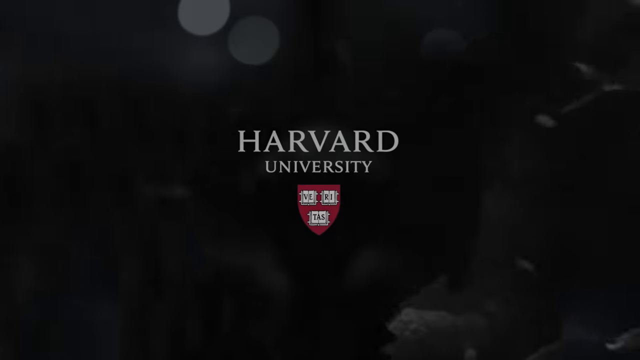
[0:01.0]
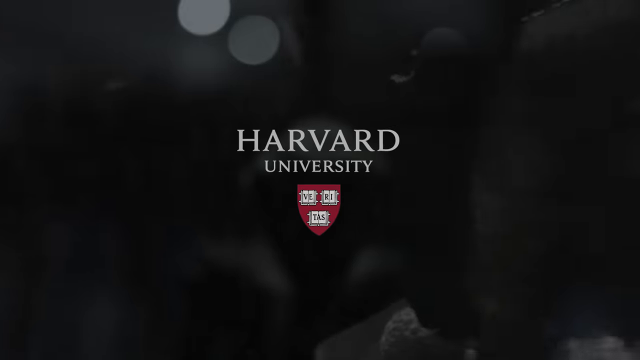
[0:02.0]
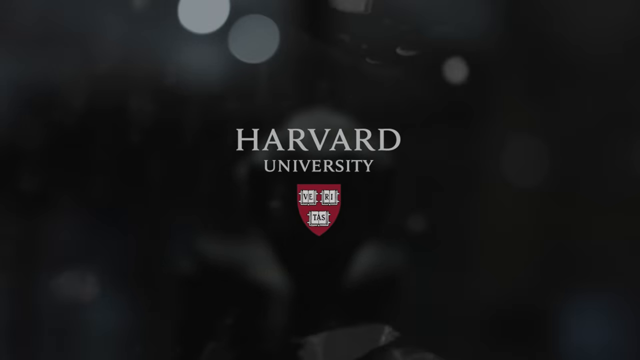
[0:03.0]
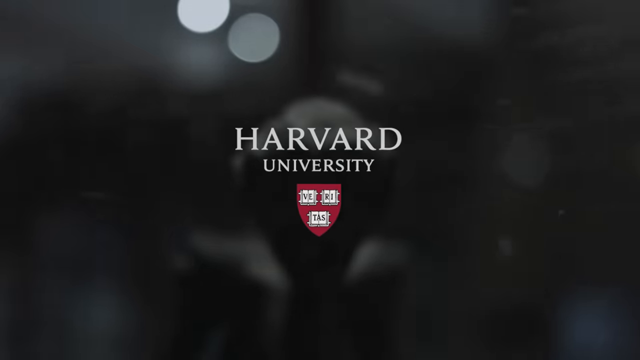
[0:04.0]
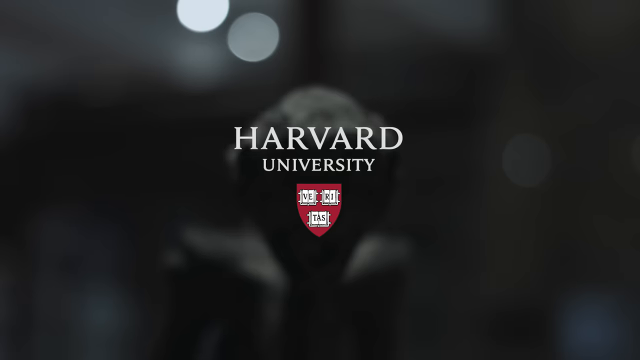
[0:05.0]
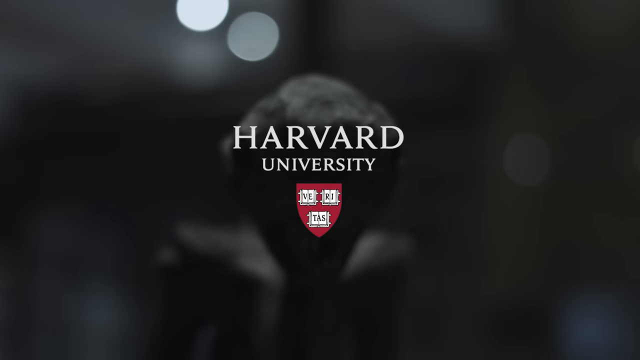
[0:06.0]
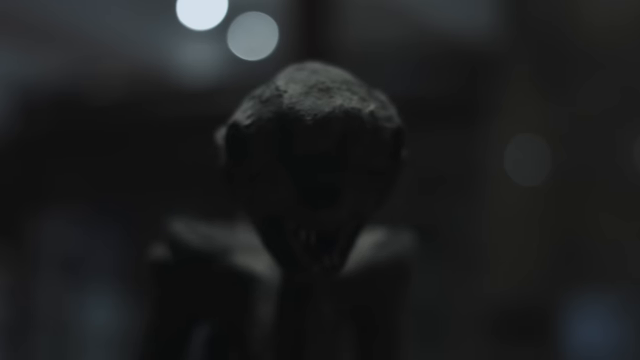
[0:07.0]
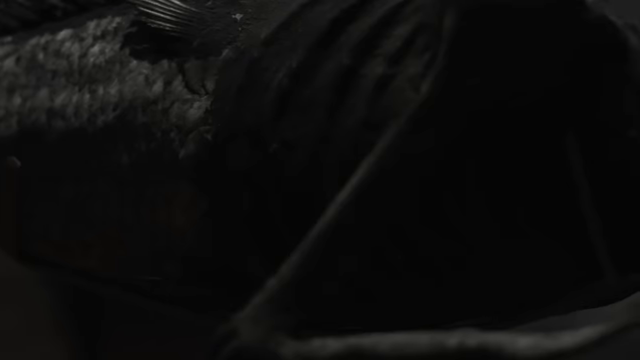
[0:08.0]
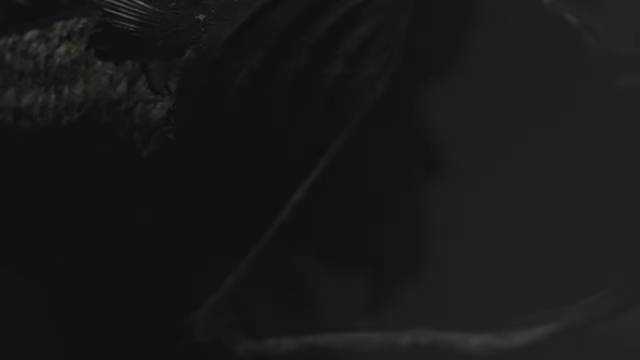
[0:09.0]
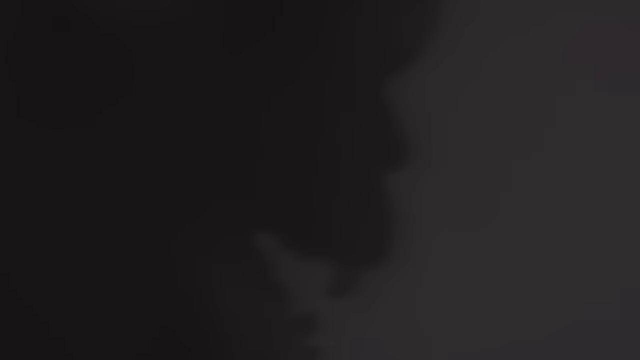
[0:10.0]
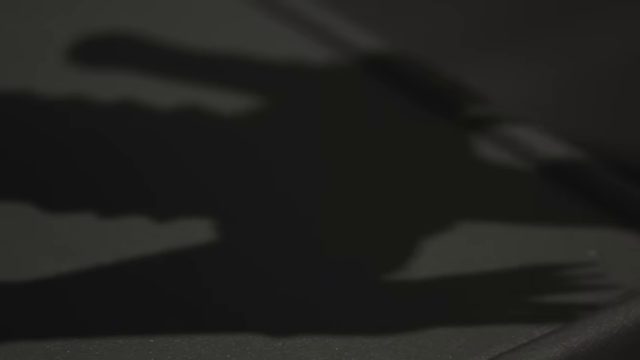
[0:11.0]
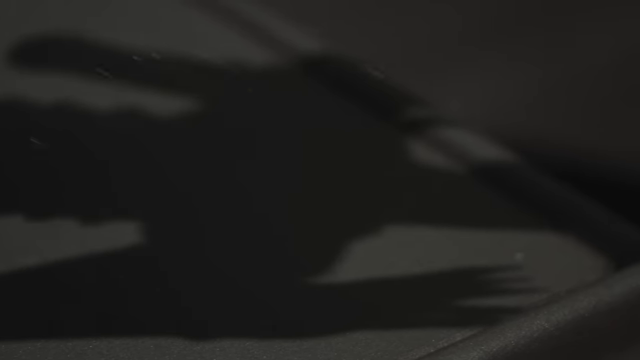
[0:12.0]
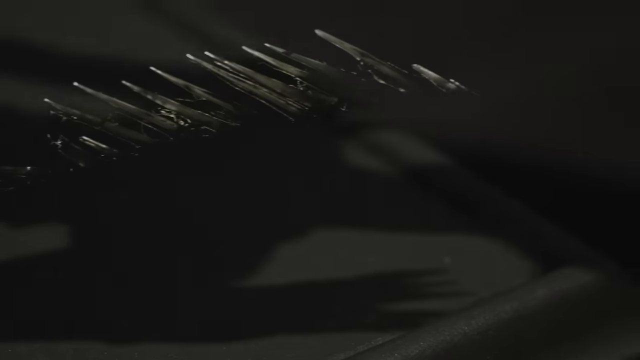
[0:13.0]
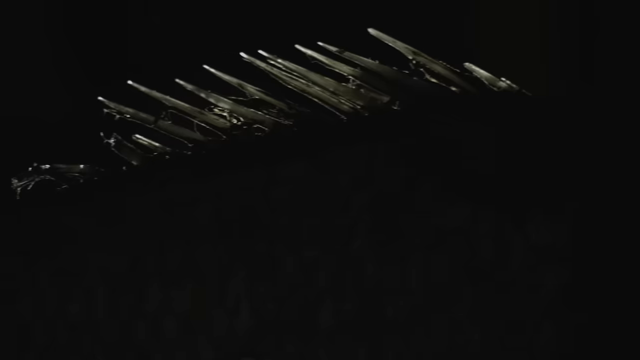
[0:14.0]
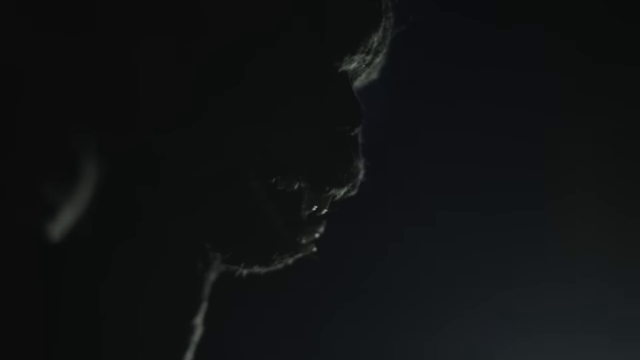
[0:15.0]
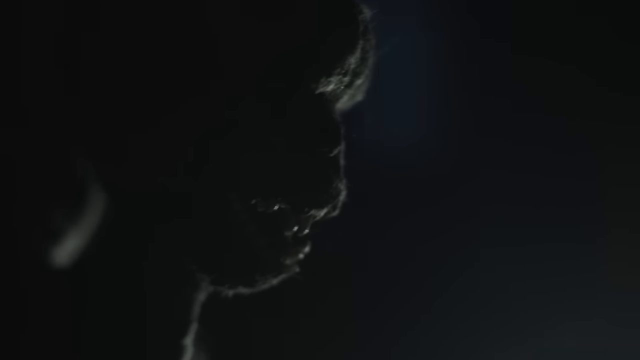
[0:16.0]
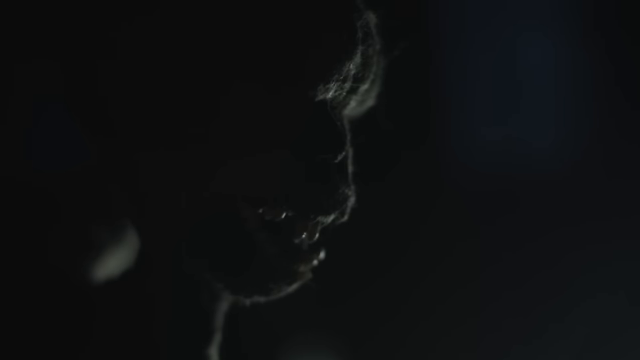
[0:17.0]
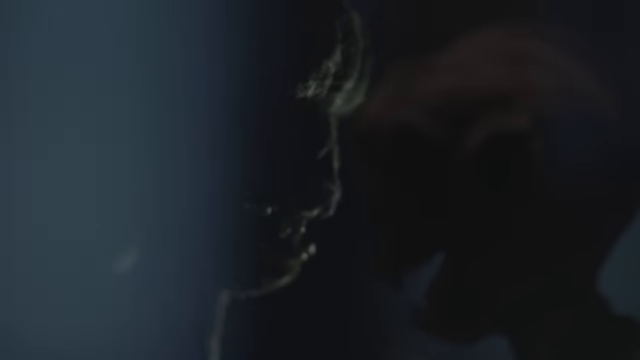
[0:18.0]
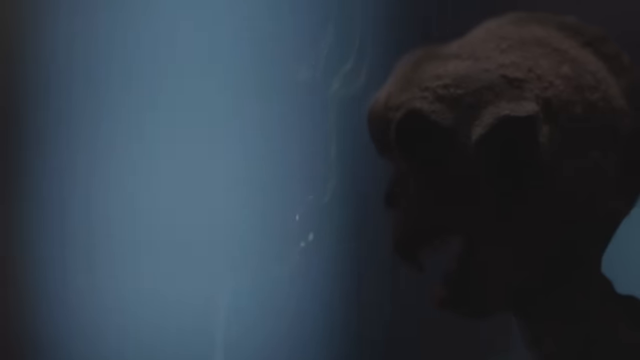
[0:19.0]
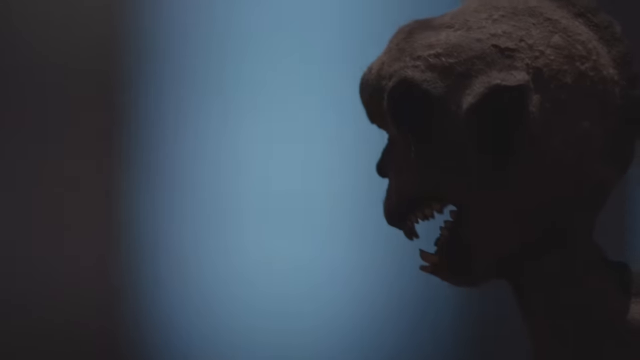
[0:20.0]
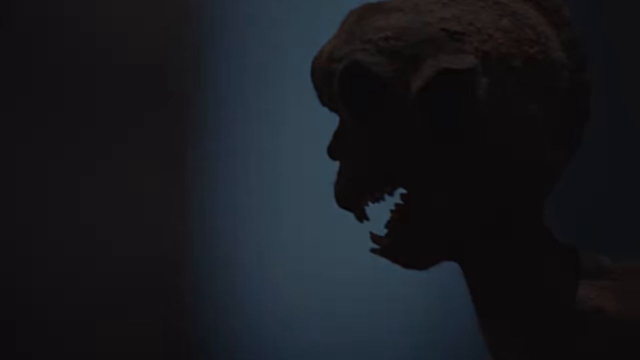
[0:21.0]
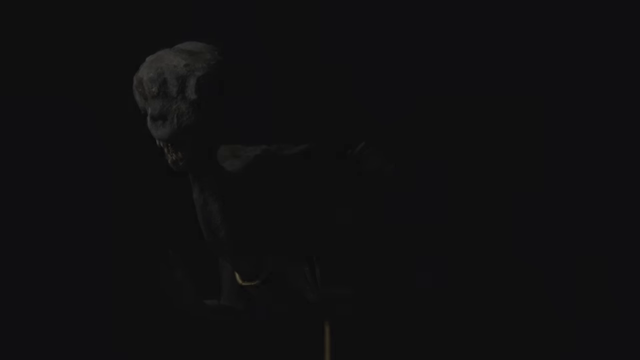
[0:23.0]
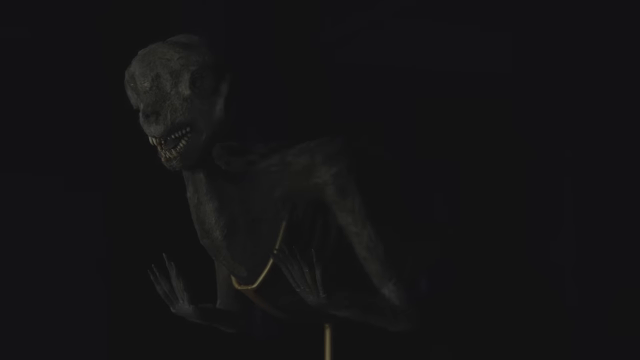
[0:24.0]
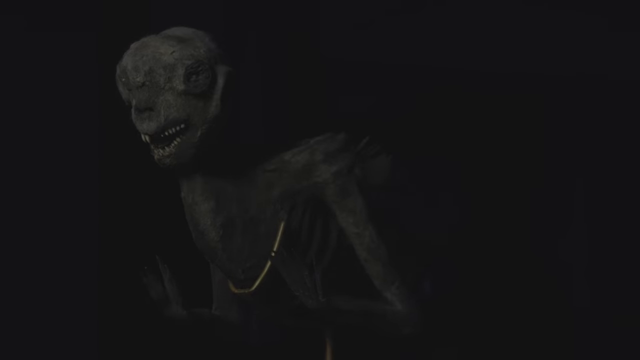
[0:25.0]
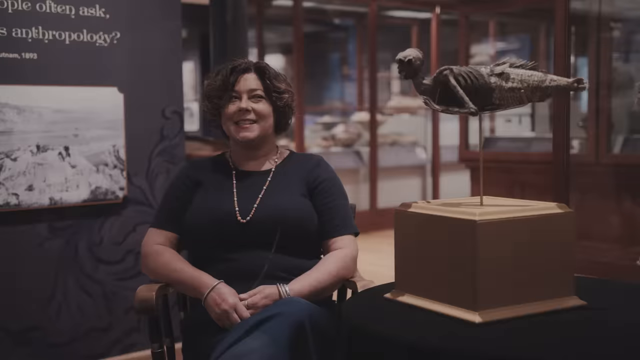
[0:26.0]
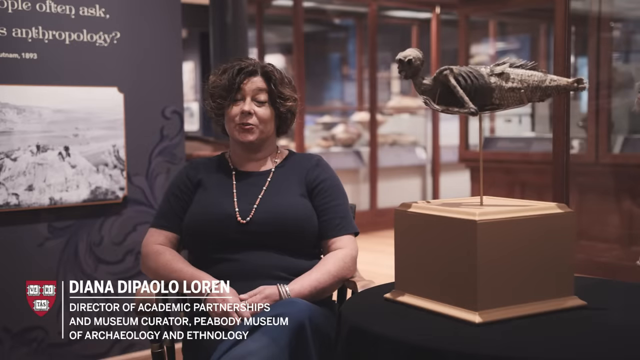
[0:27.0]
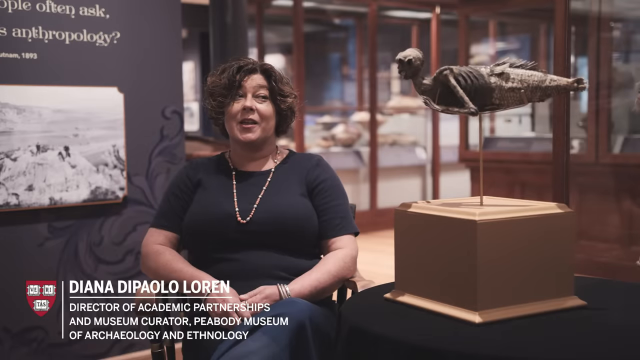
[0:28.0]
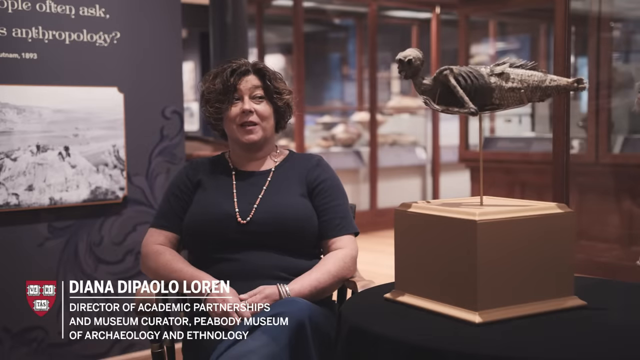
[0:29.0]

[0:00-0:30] The video opens on a black background with dim glares of light that grow brighter and brighter. A creature emerges that at first looks like a fish, possibly a piranha, and the text "Harvard University" appears. Parts of the creature's body and face are visible, and its teeth look scary. Then a woman is shown sitting down and talking. Her on-screen name appears to read "Diana," followed by "DiPaolo" and "Loren," with the title "director of academic partnerships and museum curator, Peabody Museum of Archaeology." Next a fish-like creature is shown: its front looks like a human that was not fully formed, with a fishtail at the back. The woman smiles next to it; the creature is on the right side of the image and she is on the left, facing the viewer.